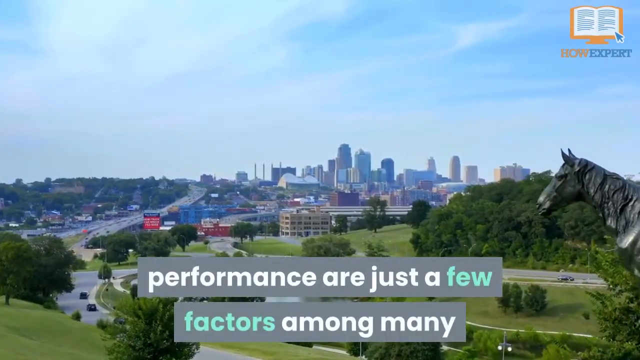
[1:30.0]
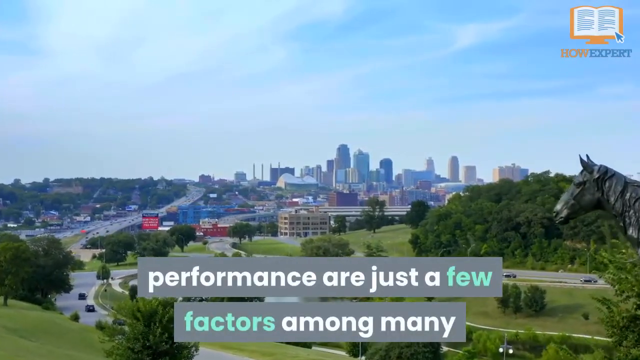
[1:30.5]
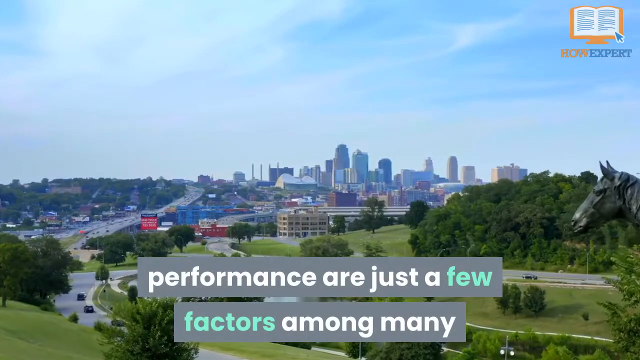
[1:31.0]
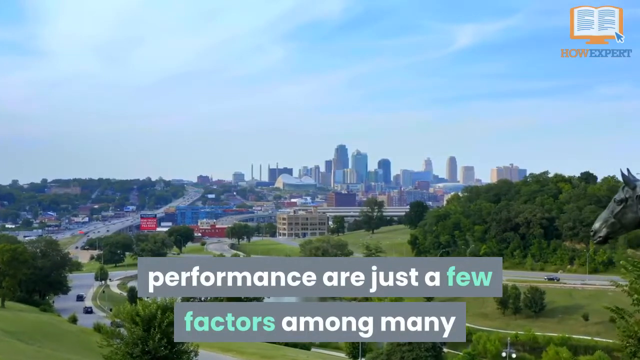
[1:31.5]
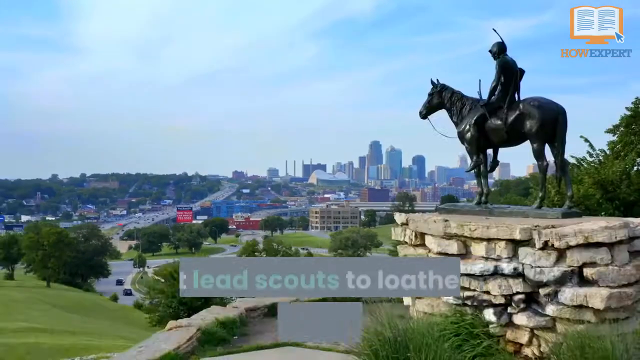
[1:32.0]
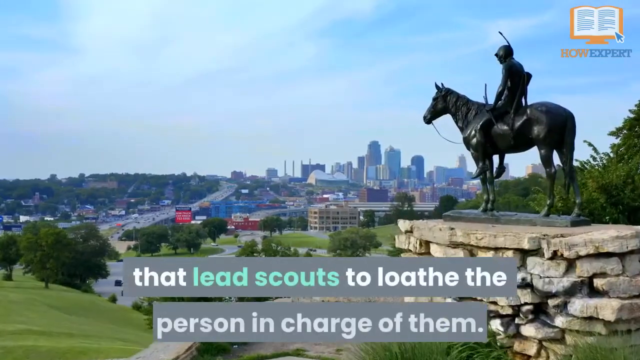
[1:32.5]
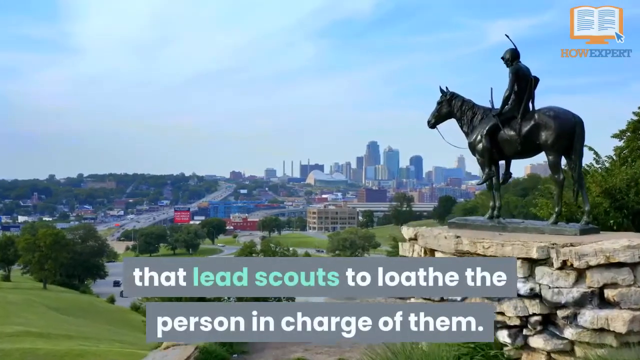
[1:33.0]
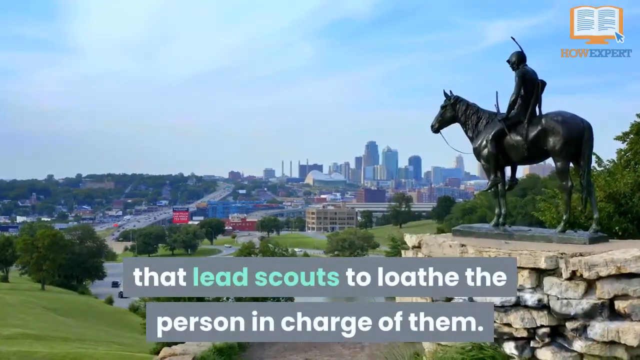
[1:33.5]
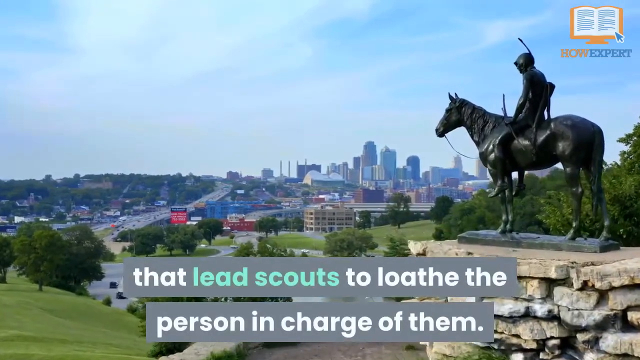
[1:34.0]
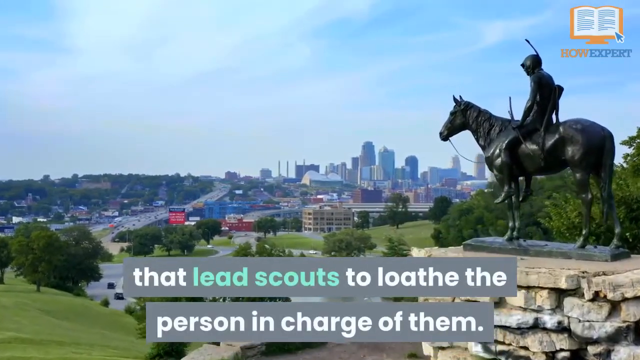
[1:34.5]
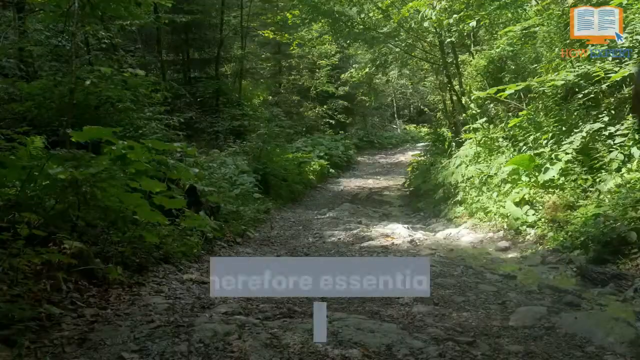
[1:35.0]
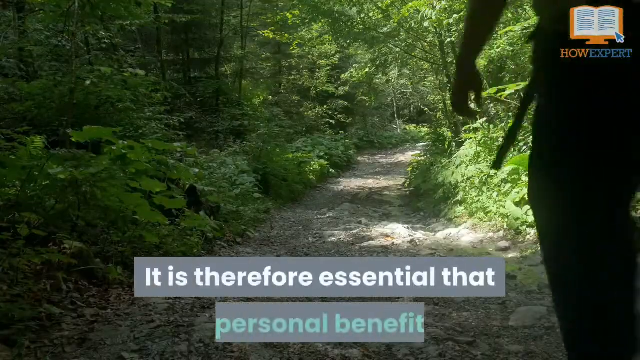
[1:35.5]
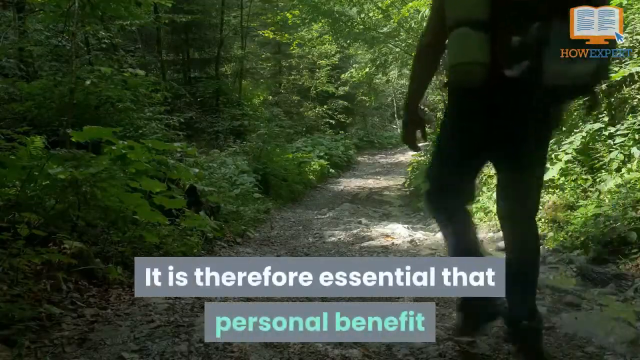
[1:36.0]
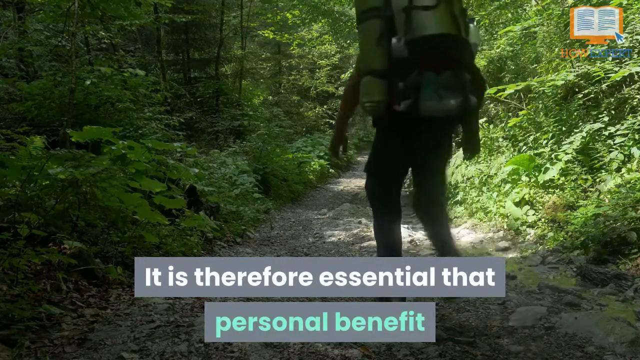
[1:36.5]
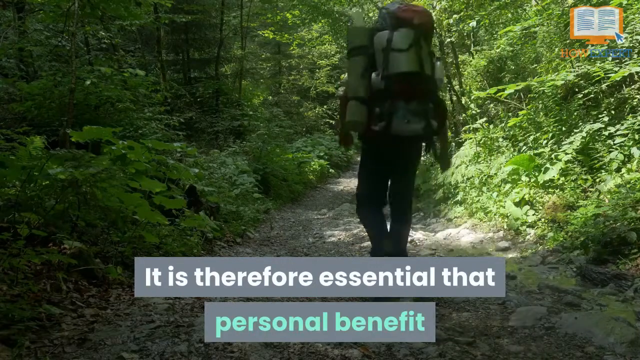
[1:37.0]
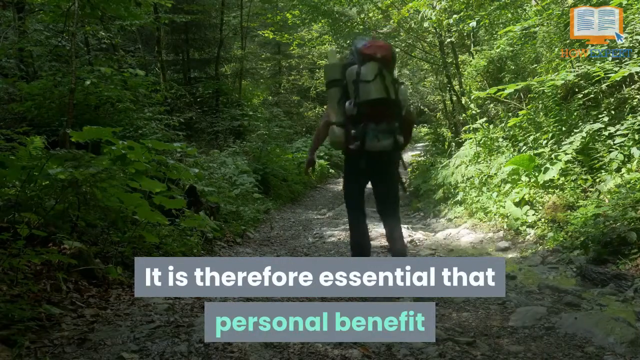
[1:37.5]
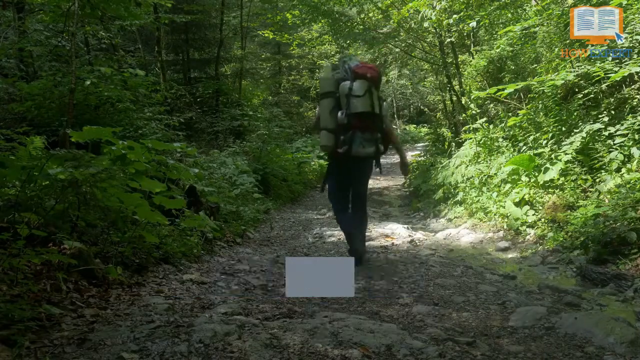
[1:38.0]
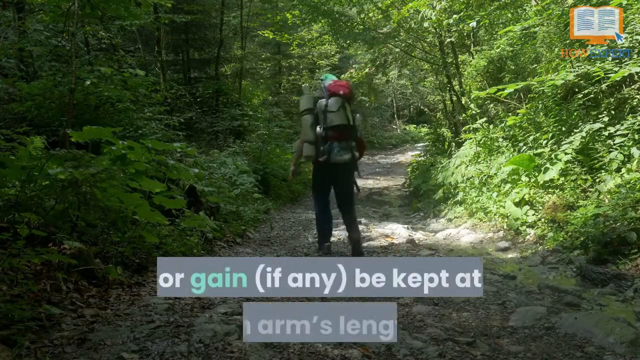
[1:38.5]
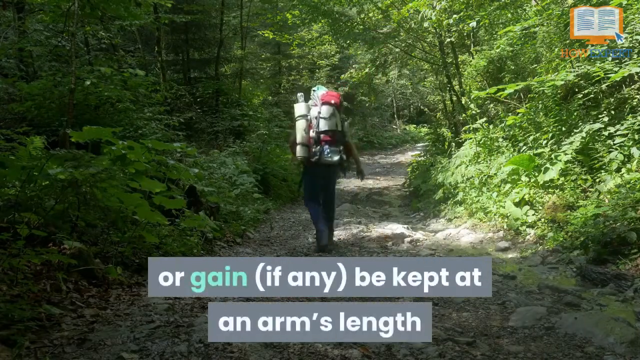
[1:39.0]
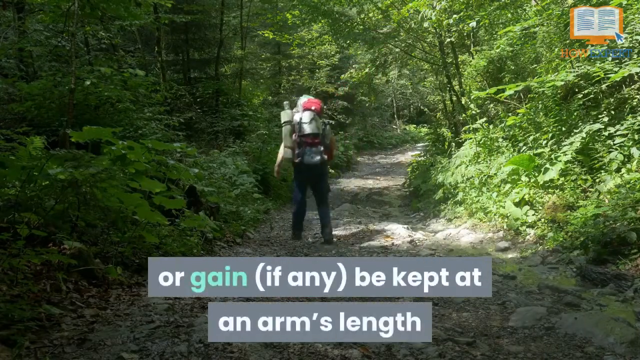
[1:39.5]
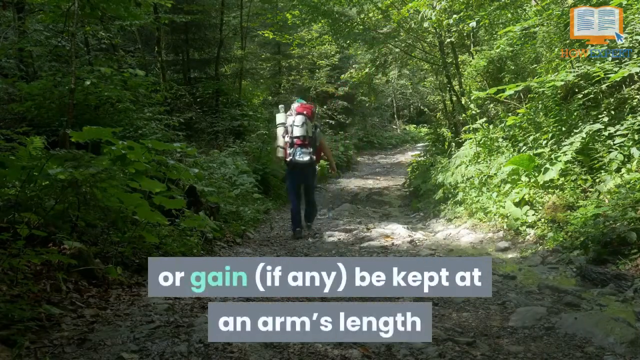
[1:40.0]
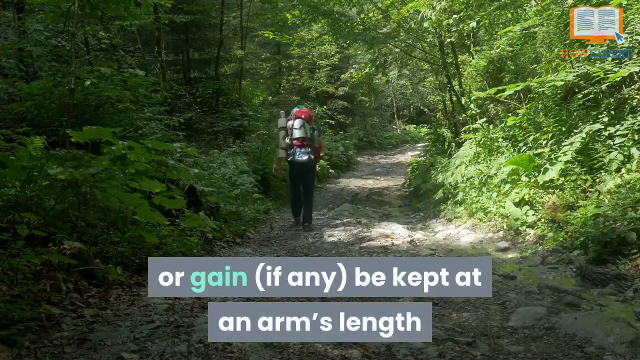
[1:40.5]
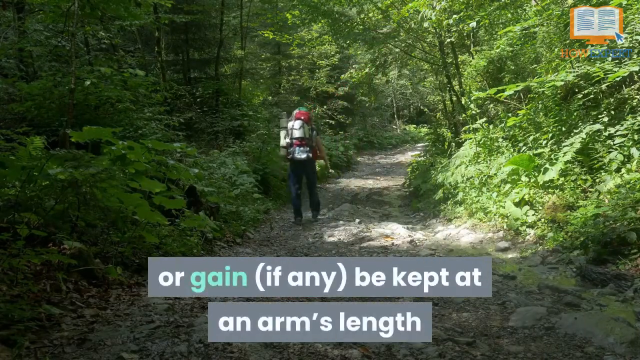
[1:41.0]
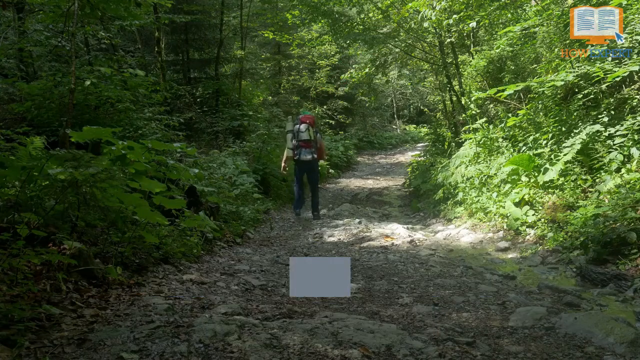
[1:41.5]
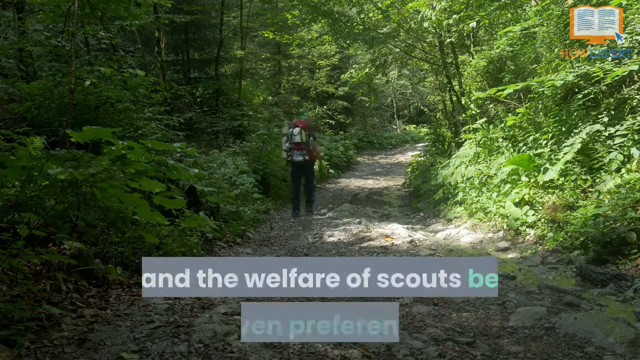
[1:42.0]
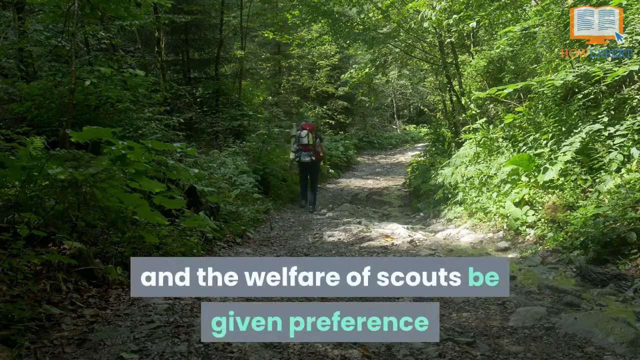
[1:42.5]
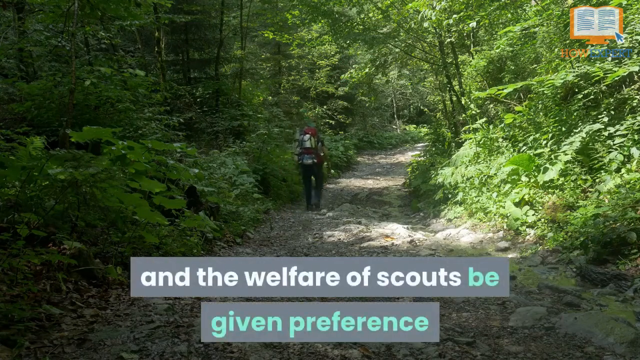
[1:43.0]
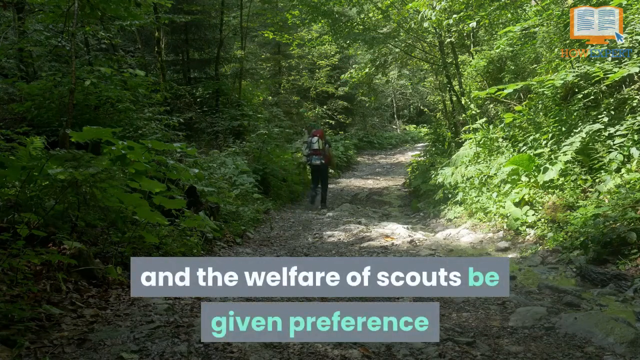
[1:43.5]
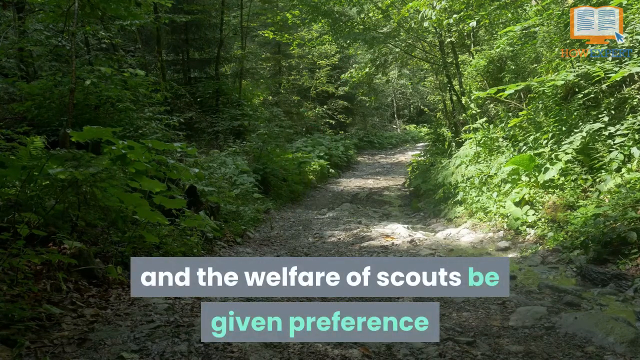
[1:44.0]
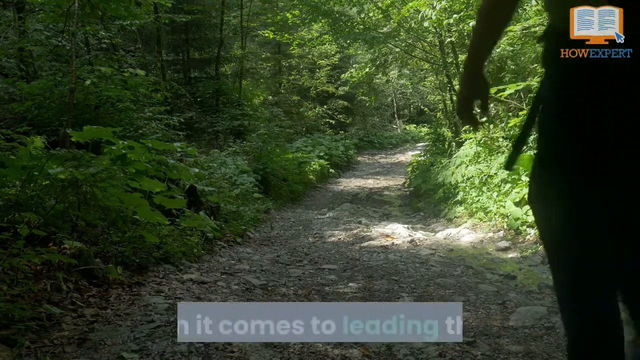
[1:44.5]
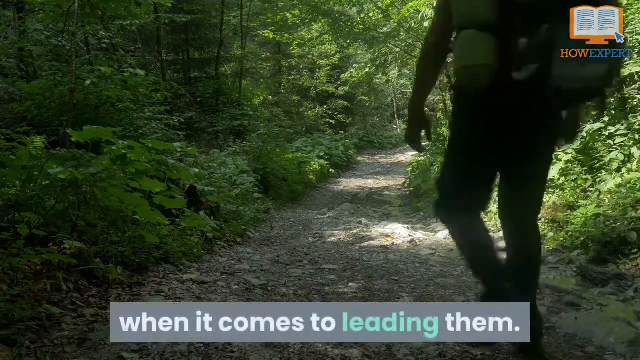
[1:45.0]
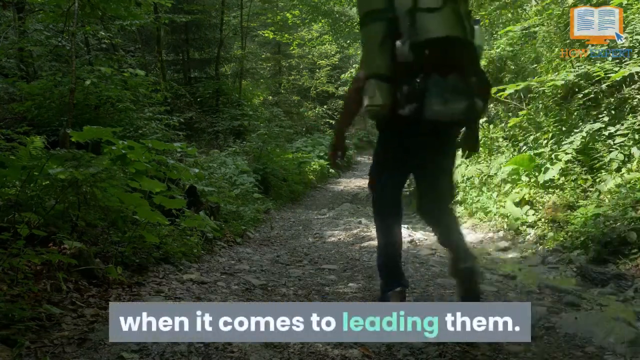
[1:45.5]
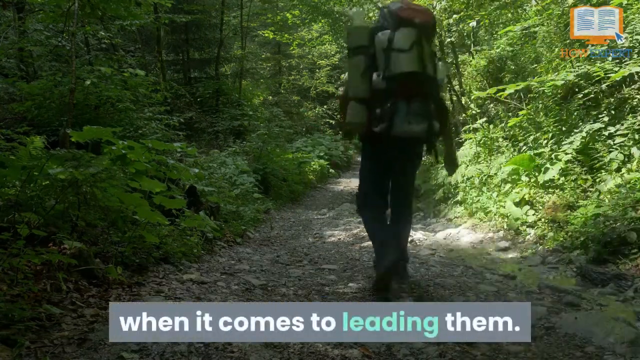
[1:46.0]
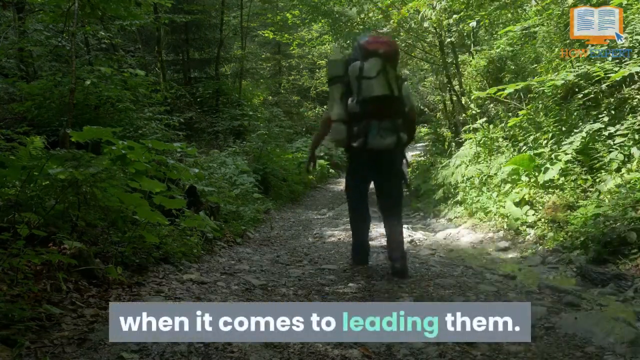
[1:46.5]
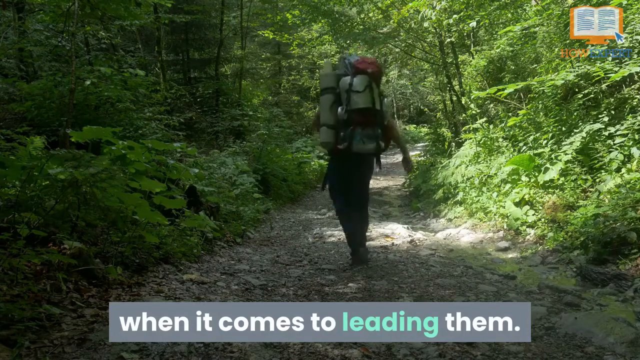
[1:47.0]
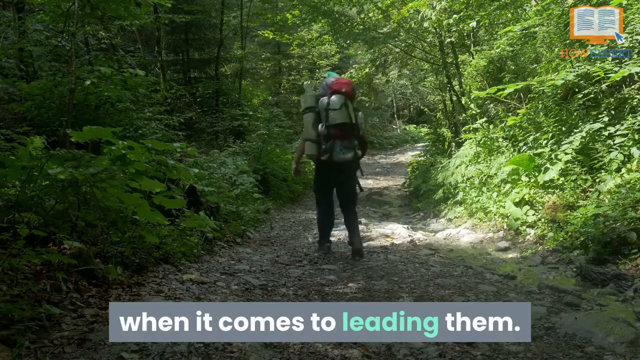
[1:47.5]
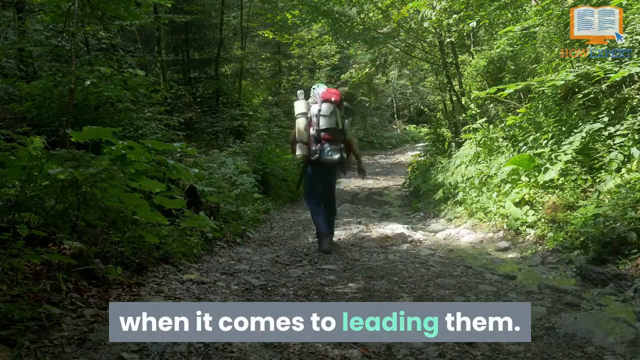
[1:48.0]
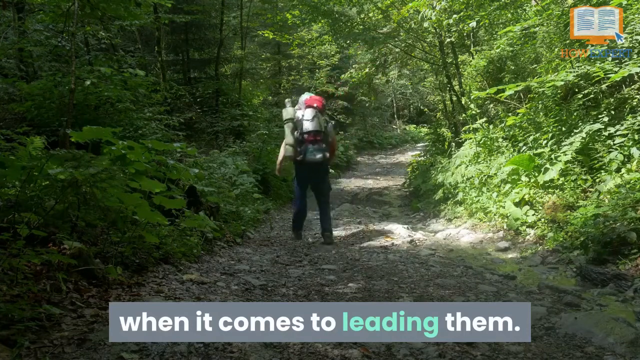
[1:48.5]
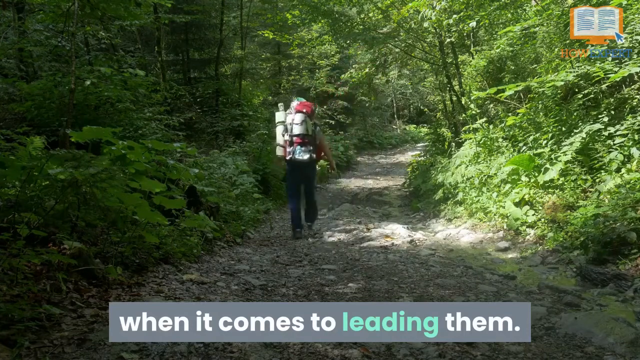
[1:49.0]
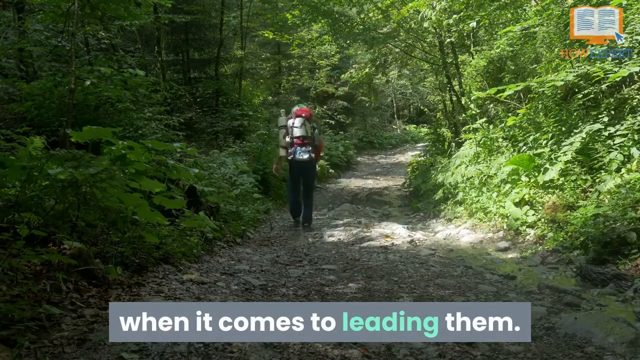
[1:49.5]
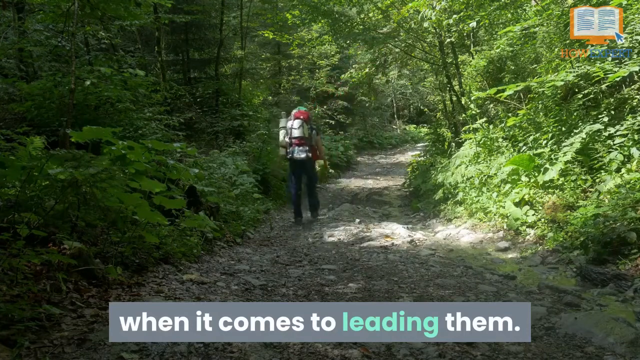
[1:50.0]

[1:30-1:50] The horse on the rocks overlooking the city appears again, with the text "It is therefore essential that personal benefit or gain, if any, be kept at an arm's length." The video returns to the trail, with backpacks in the shot, and the text "and the welfare of scouts be given preference when it comes to leading them." Another person with a backpack walks on the trail. The city shot shows several roads, cars, several buildings, green trees, really well manicured lawns and a decent-sized skyline. The statue is unclear; it is maybe a statue of an Indian, since its head kind of looks like it has a feather or something on top.